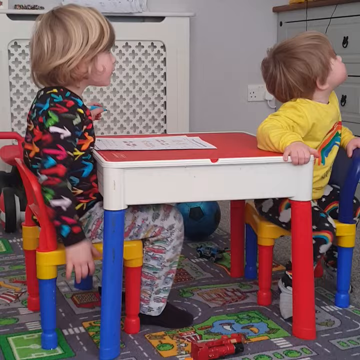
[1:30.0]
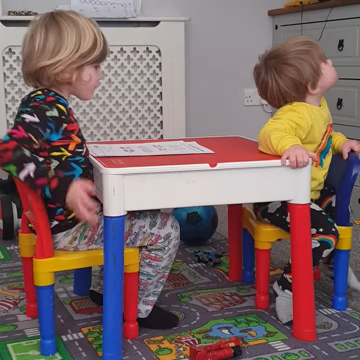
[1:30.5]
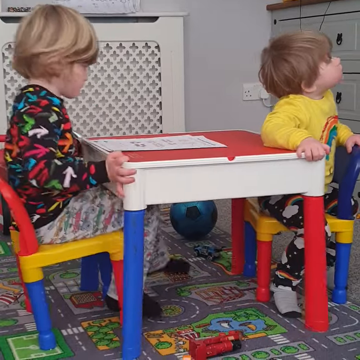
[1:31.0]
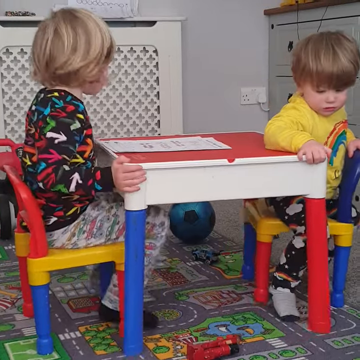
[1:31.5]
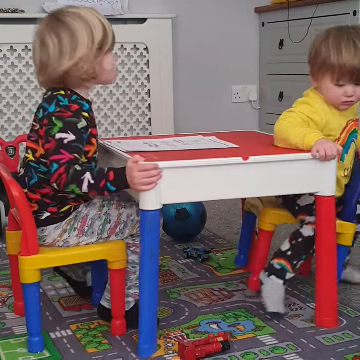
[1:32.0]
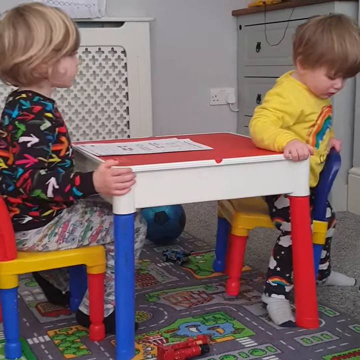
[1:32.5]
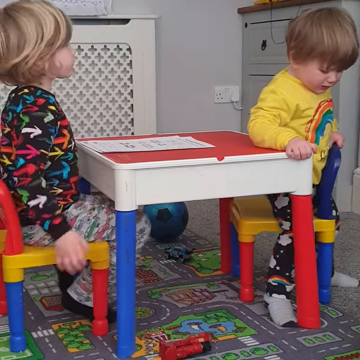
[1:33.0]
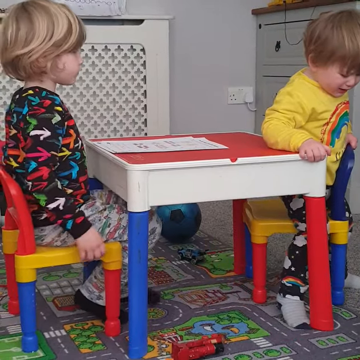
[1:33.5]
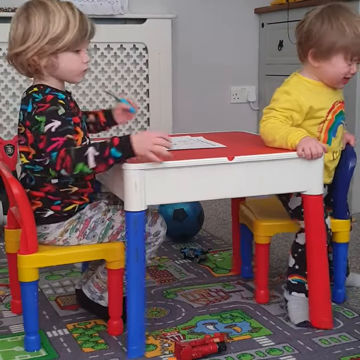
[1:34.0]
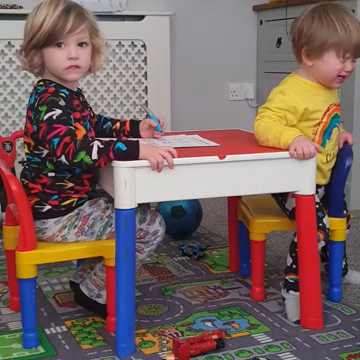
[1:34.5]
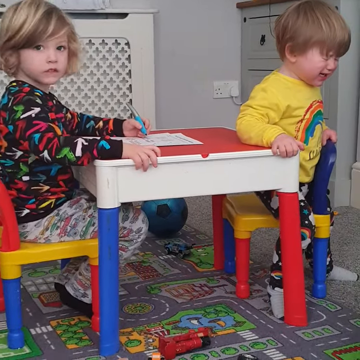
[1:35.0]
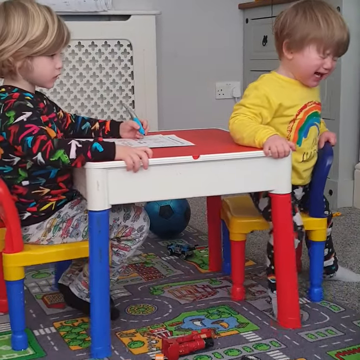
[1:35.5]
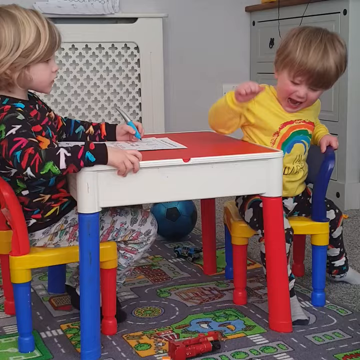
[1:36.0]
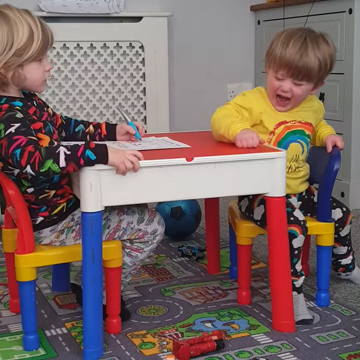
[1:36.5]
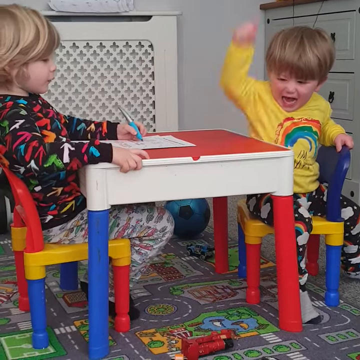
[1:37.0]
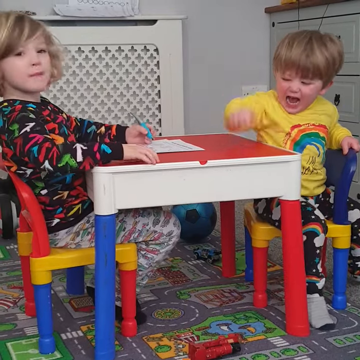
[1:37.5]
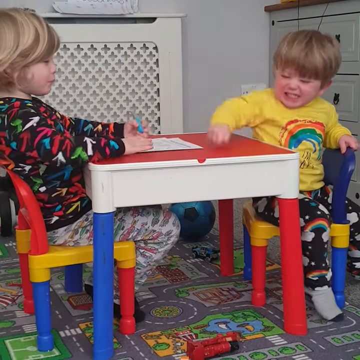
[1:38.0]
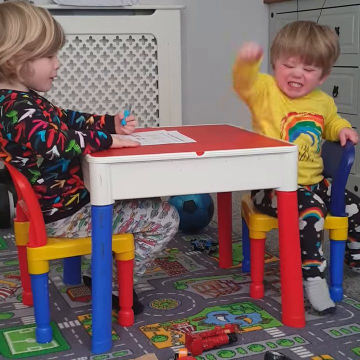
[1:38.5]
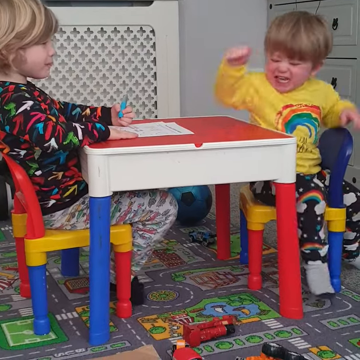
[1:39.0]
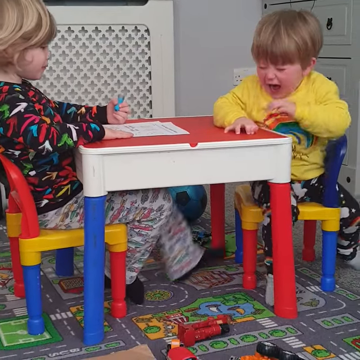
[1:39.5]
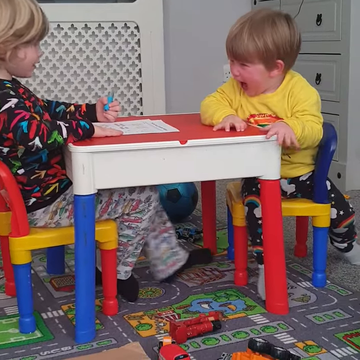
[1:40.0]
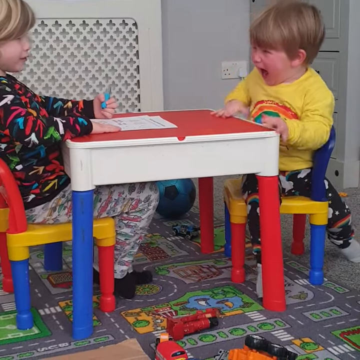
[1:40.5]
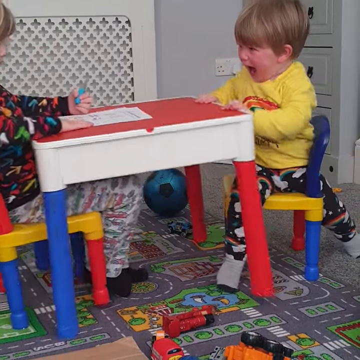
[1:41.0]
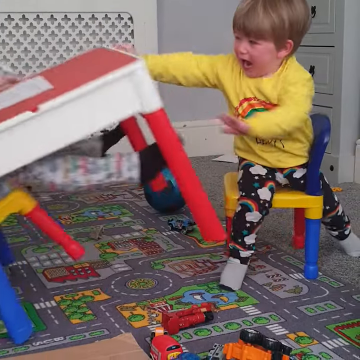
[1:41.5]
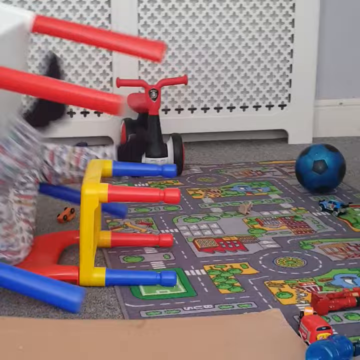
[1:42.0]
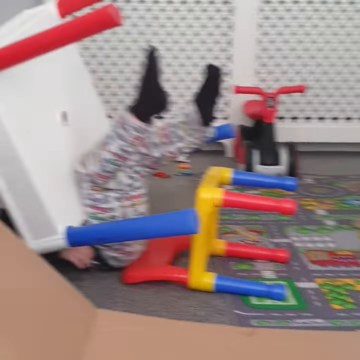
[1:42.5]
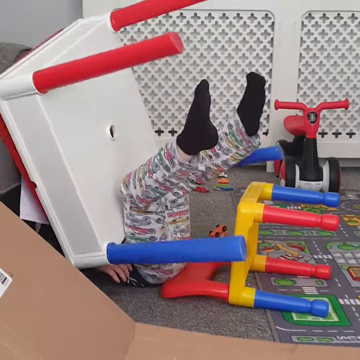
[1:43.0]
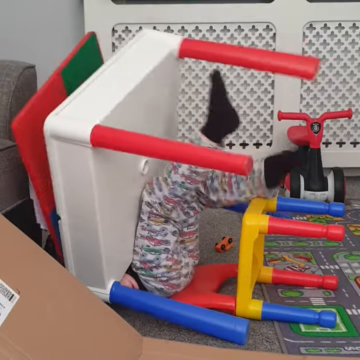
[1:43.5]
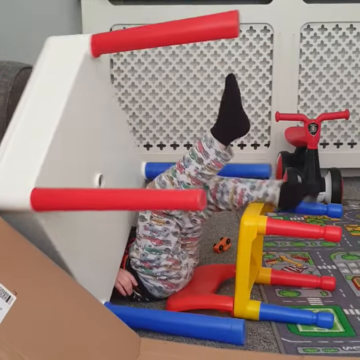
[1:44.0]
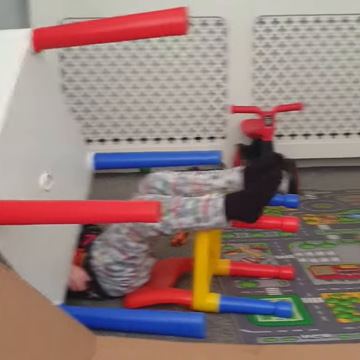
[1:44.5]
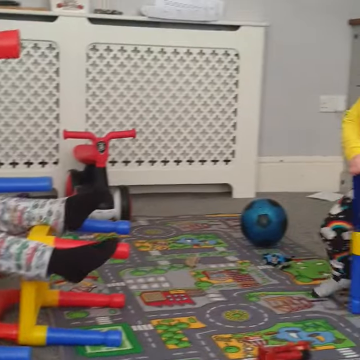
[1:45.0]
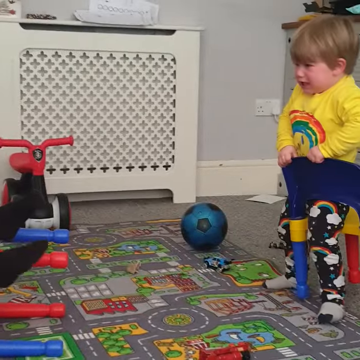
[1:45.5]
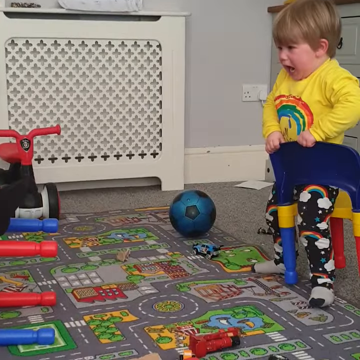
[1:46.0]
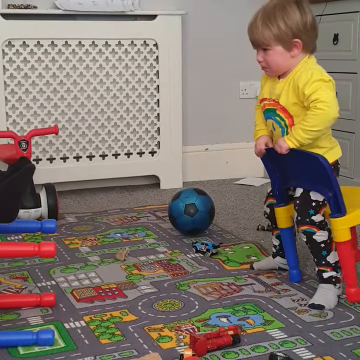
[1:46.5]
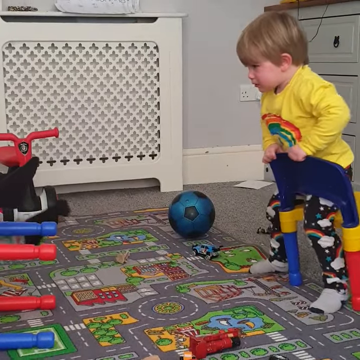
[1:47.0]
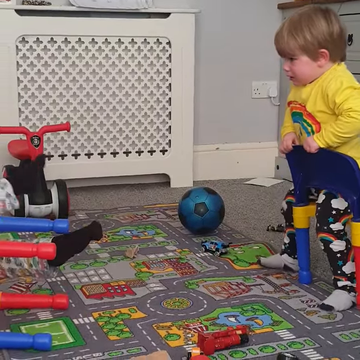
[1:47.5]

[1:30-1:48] The older child pushes the table onto the younger child. The younger child starts crying, slaps the table multiple times, and then pushes the table back. The table falls on the older child, who goes back and flips onto his back, with the chair and table going with him. He lies on the ground with only his legs and feet visible, flopping them in the air. The younger child seems somewhat shocked and amused that the table and the older child flipped over.